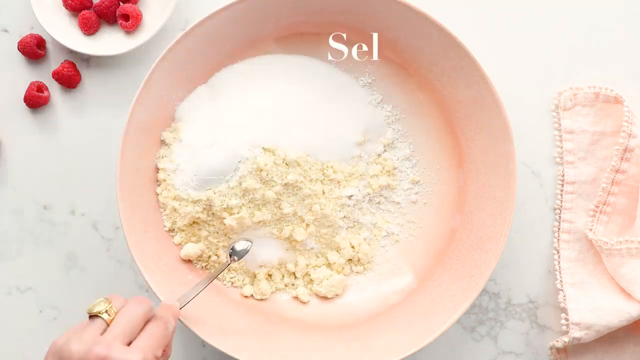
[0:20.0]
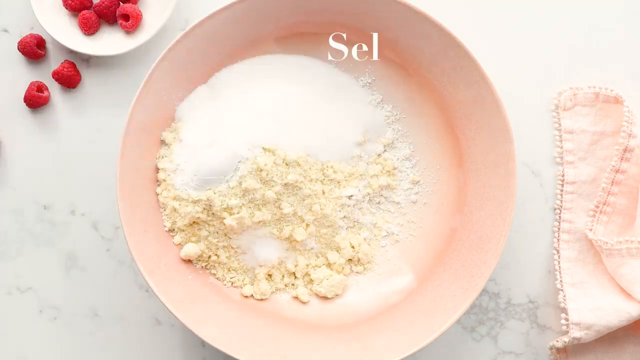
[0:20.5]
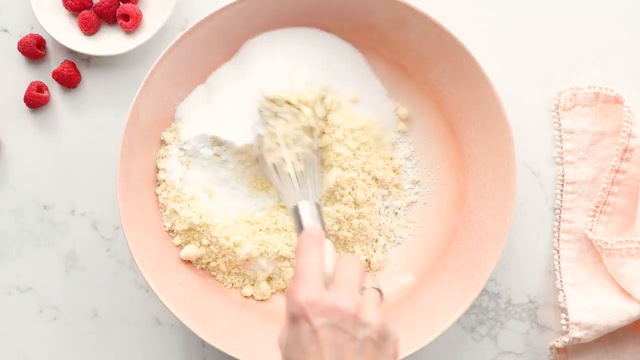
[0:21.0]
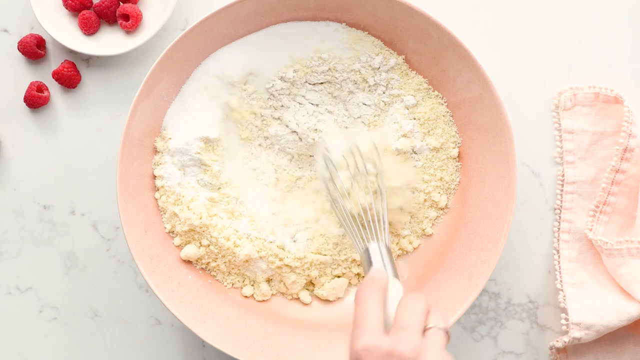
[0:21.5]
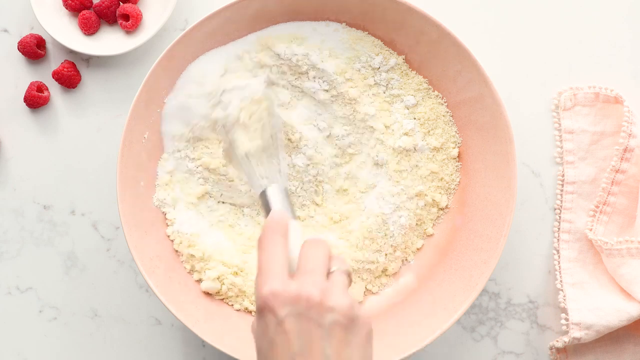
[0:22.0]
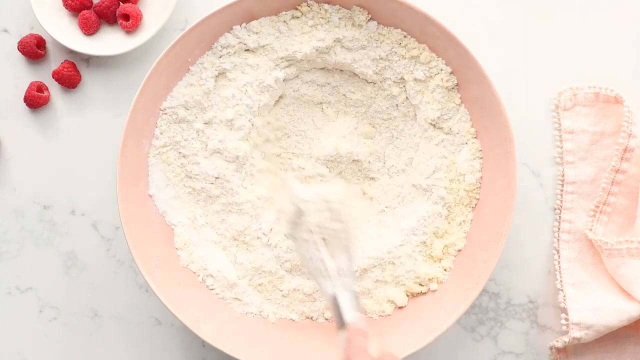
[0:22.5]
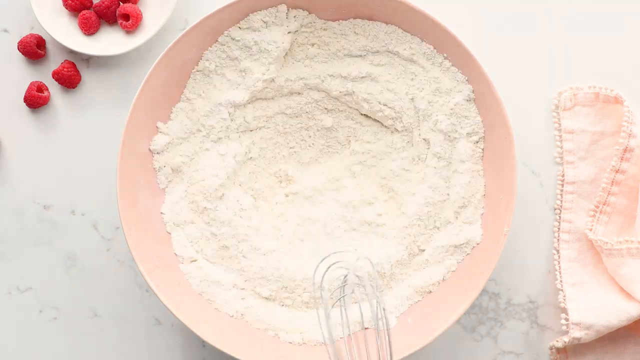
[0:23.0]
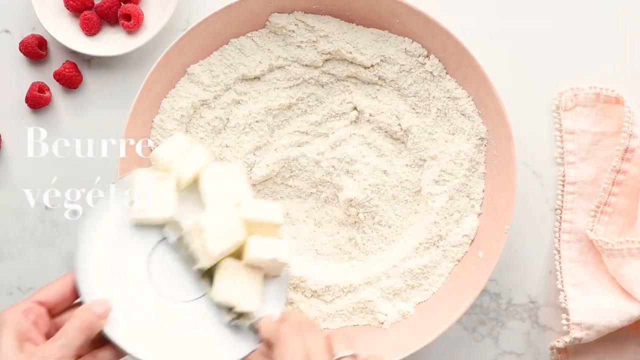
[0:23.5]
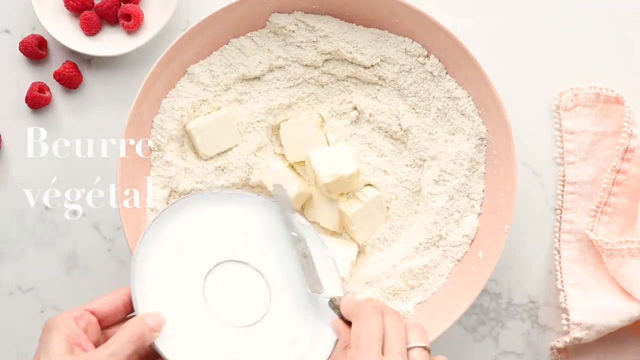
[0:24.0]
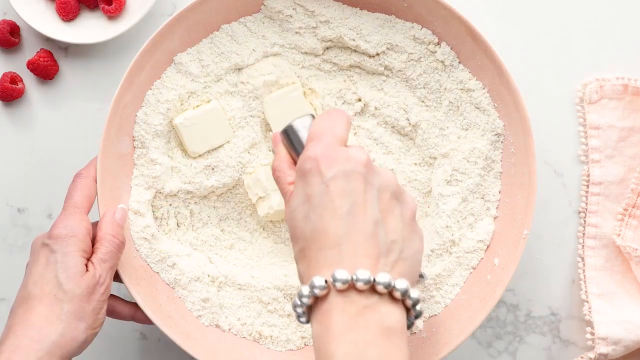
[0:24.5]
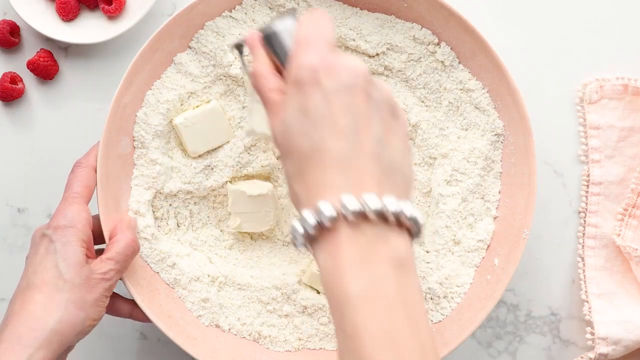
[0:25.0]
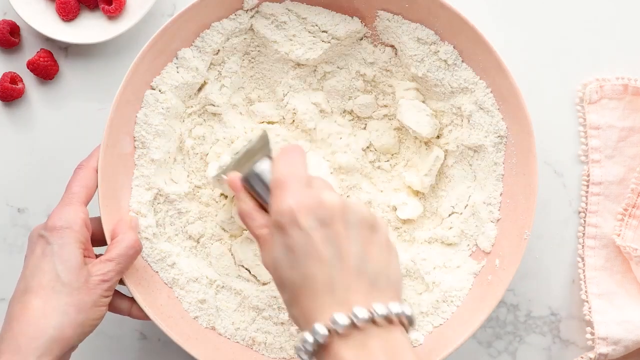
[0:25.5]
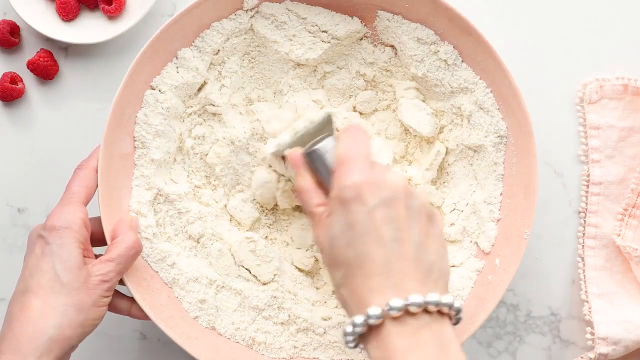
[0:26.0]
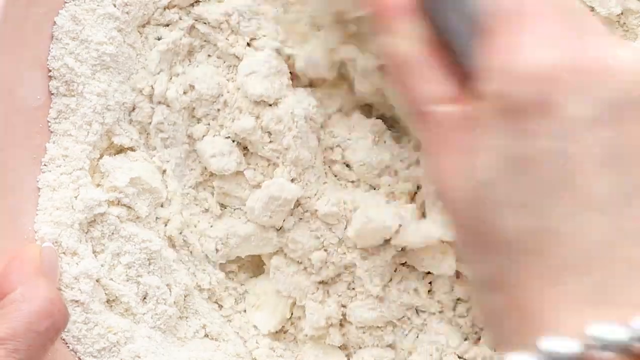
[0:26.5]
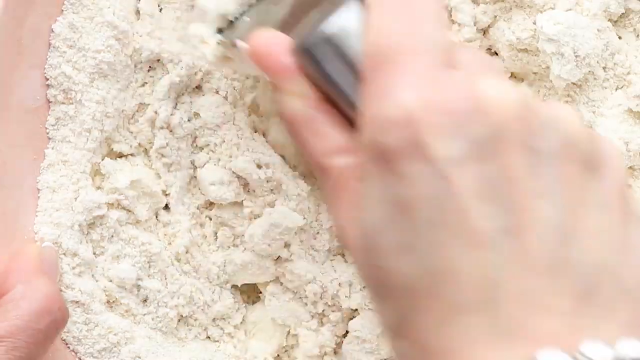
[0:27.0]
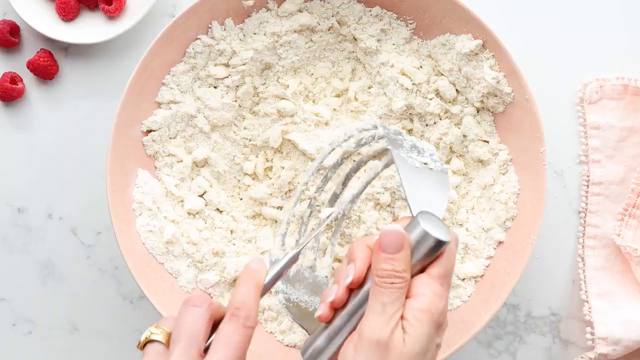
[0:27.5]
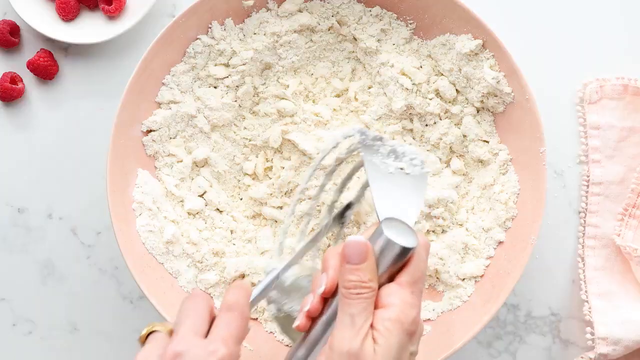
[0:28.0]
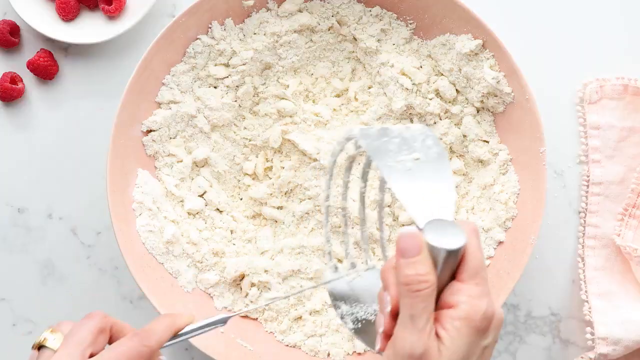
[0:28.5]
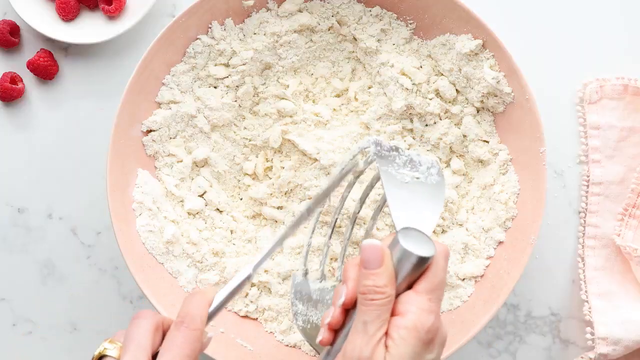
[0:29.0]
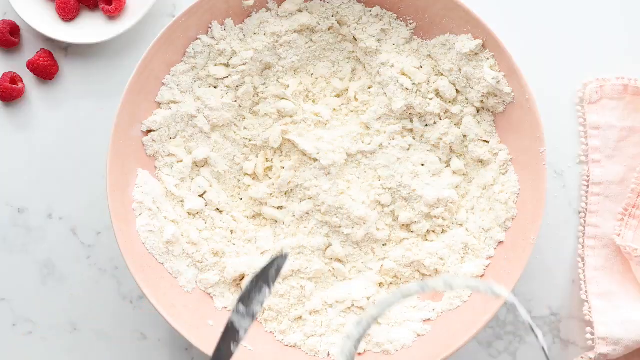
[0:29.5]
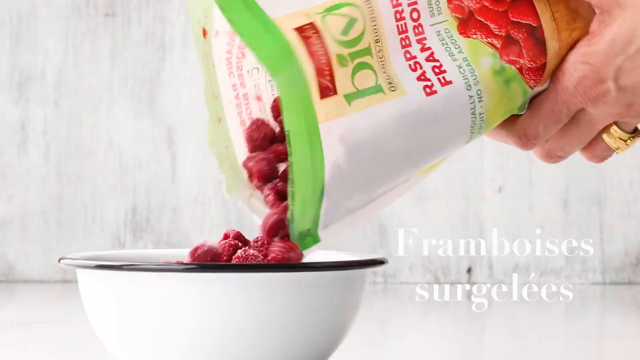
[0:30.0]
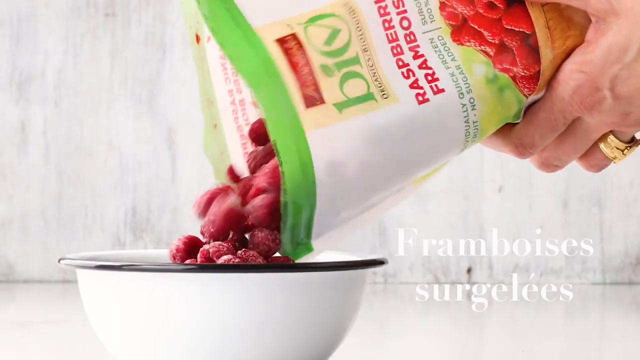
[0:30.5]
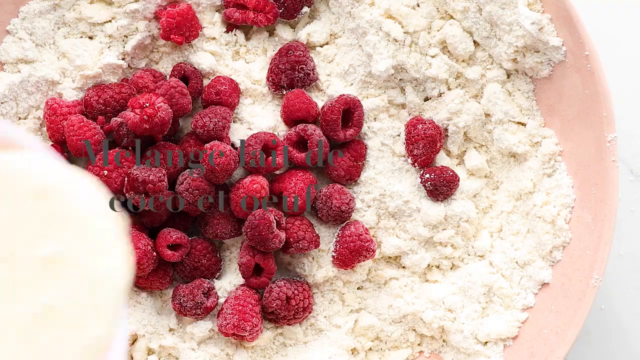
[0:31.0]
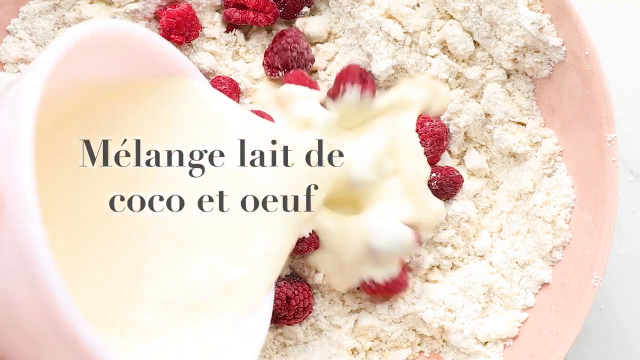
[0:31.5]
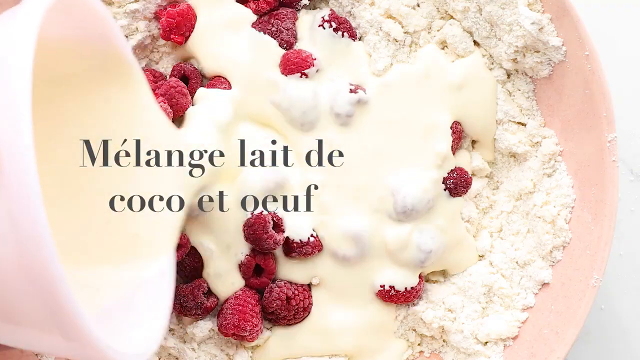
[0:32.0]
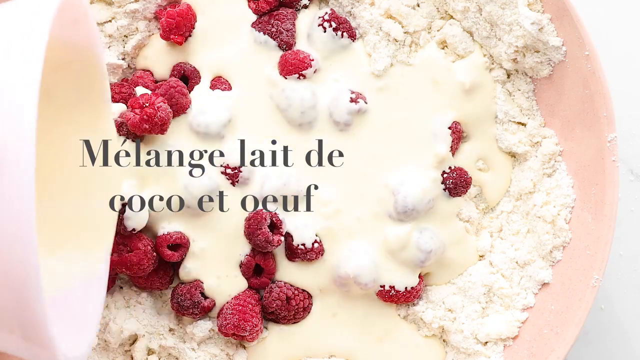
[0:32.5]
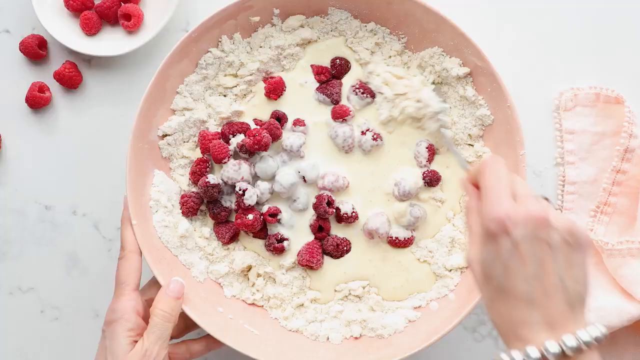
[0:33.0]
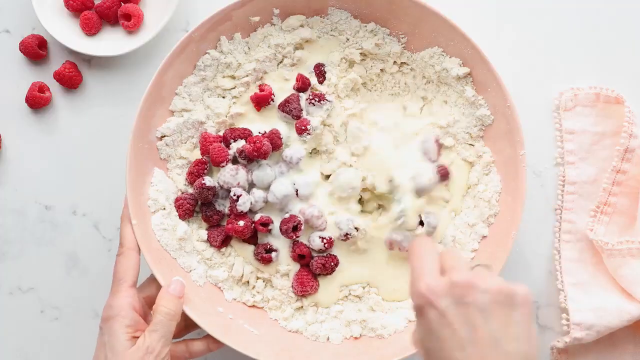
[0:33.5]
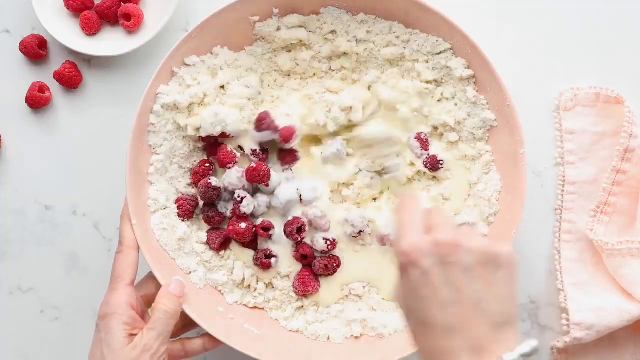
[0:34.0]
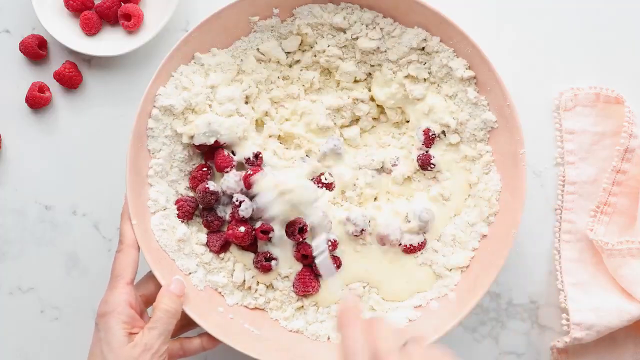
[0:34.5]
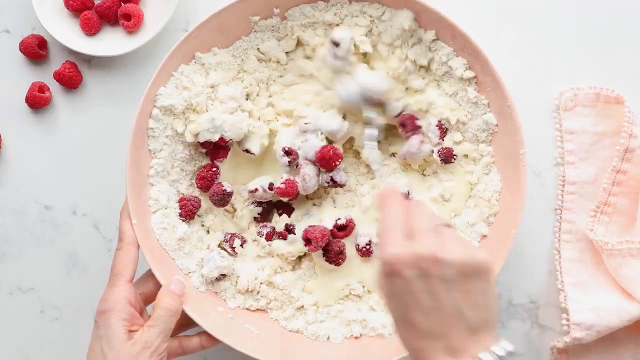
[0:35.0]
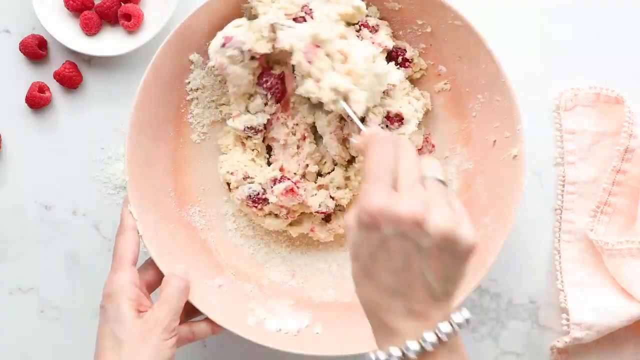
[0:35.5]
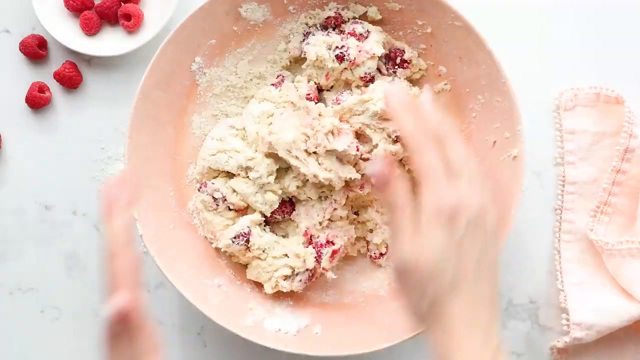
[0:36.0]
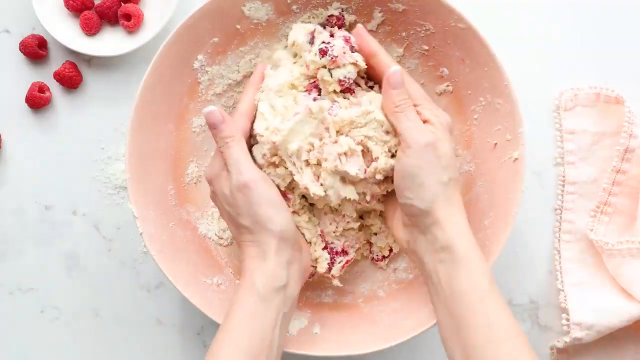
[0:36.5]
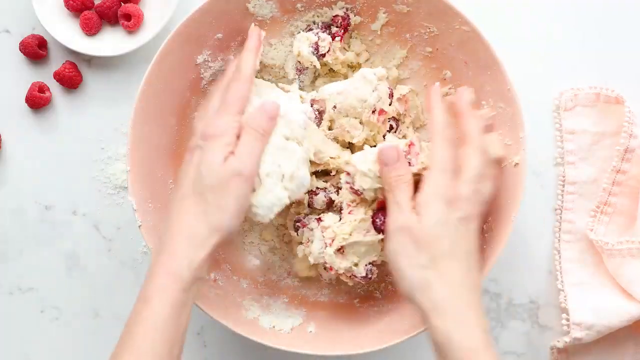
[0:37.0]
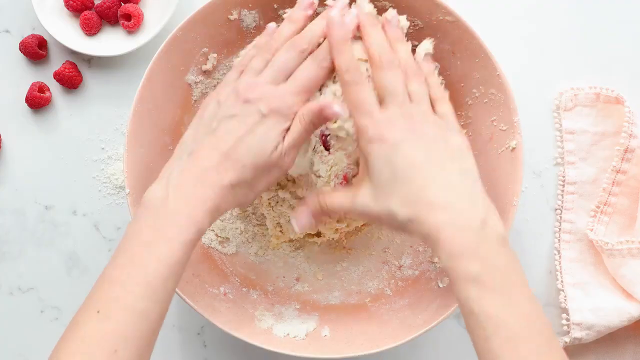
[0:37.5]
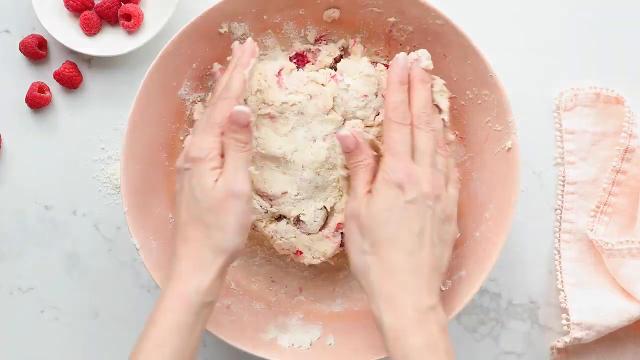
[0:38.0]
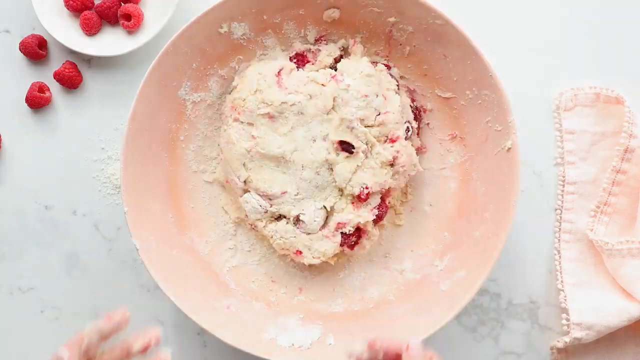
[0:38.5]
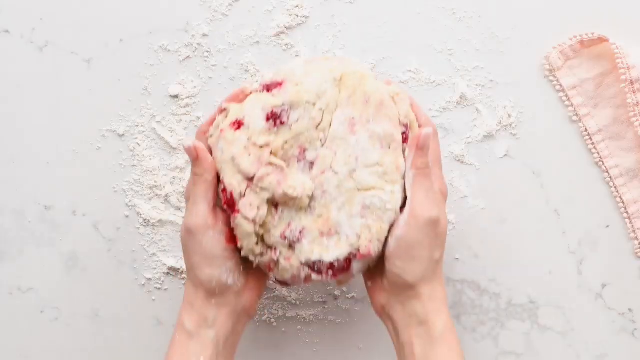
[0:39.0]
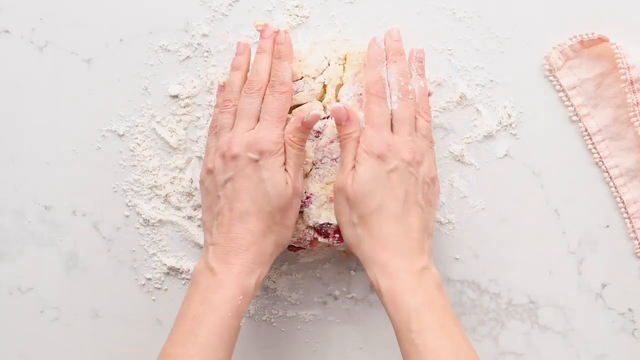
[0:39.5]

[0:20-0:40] The contents of the bowl, including powdered almonds and sugar, are mixed. Butter cubes are added and crushed down into the mixture. The device used to mince the butter cubes into the mixture is removed, and the remnants are cleaned off it into the bowl with a knife. Raspberries are emptied from a plastic bag into a bowl. The raspberries are added to the mixture along with what appears to be a milk and coconut based liquid, while French text appears on the screen. Everything is mixed together until it thickens, gradually becoming something of a paste. The paste is worked into a ball, then lifted out of the bowl onto a kneading board that has flour on it so the mixture can be manipulated.